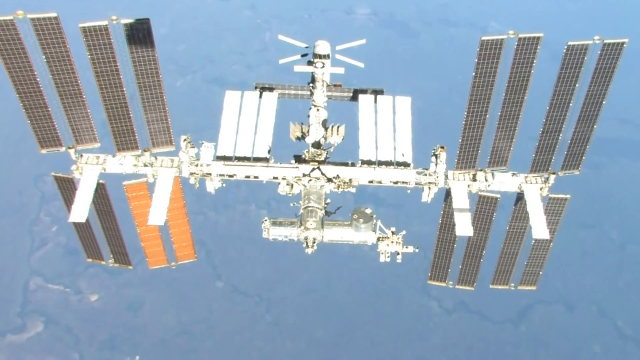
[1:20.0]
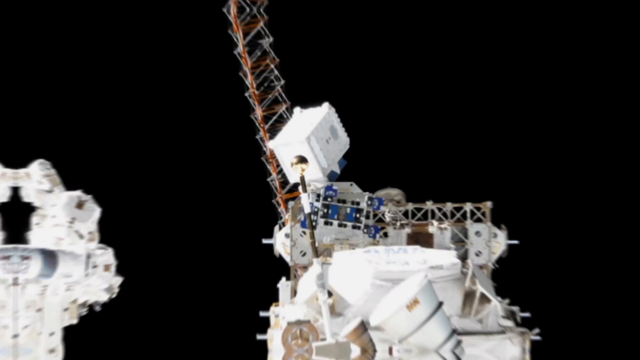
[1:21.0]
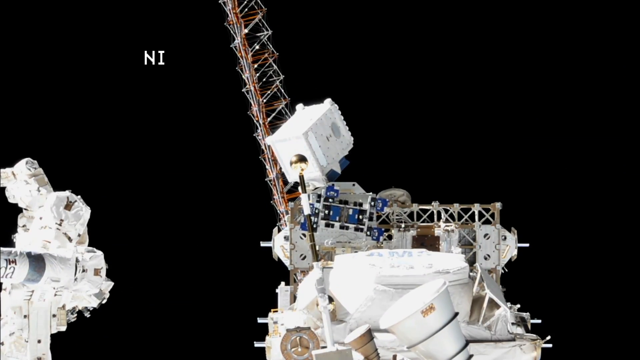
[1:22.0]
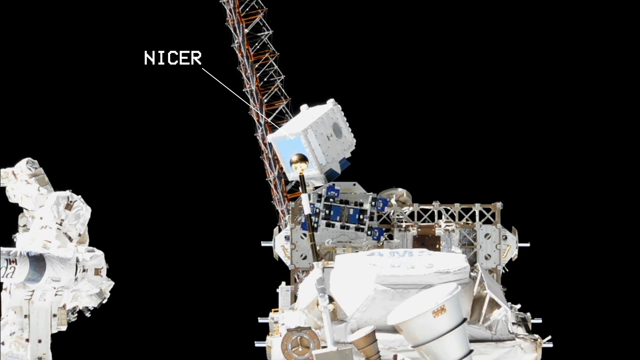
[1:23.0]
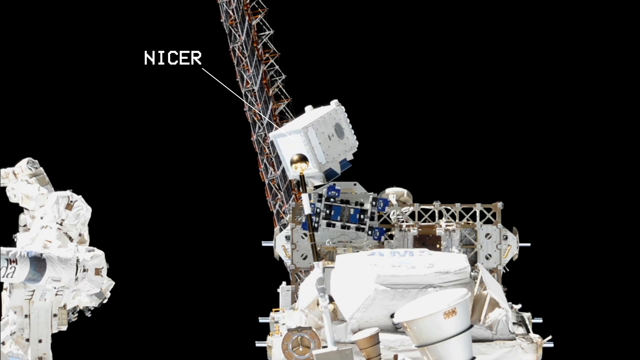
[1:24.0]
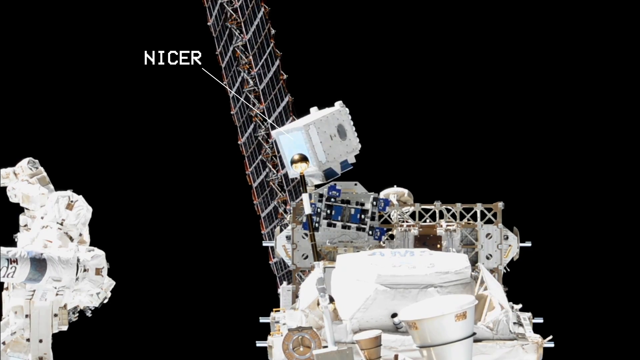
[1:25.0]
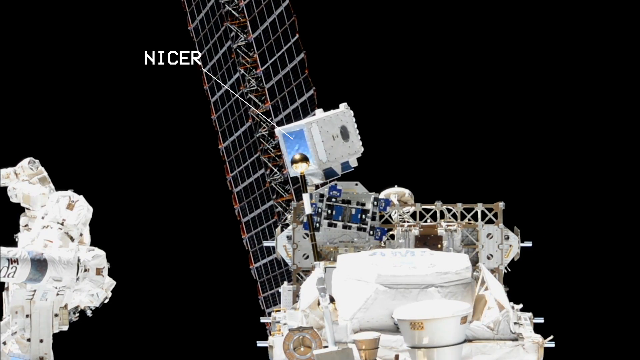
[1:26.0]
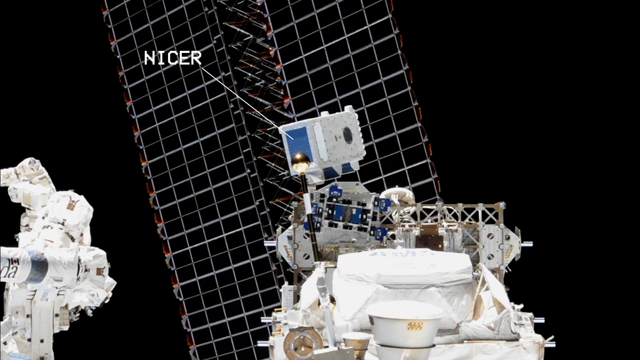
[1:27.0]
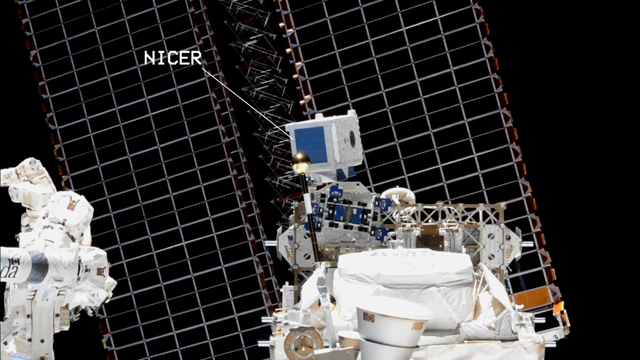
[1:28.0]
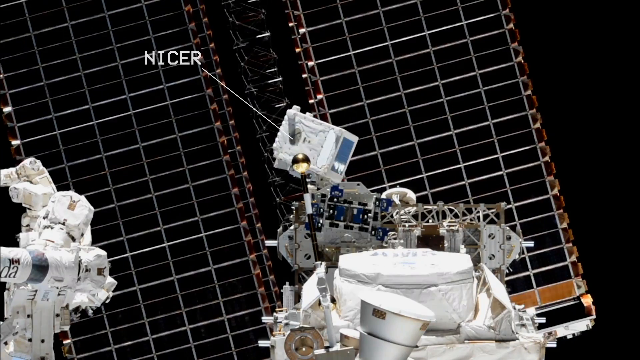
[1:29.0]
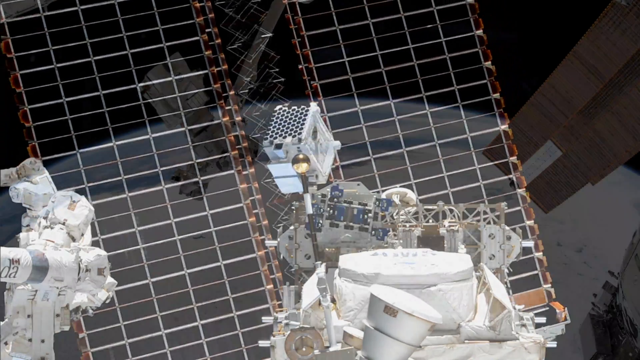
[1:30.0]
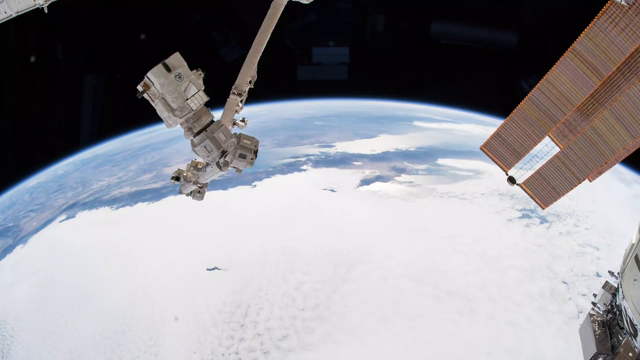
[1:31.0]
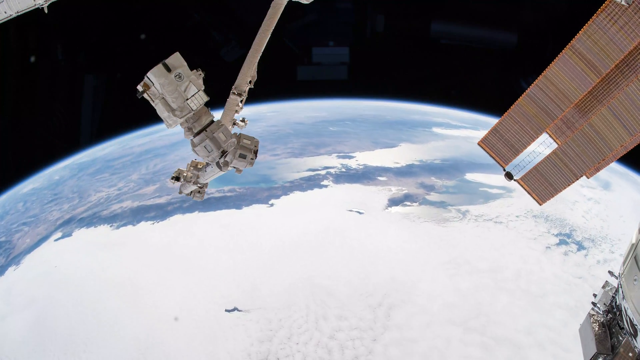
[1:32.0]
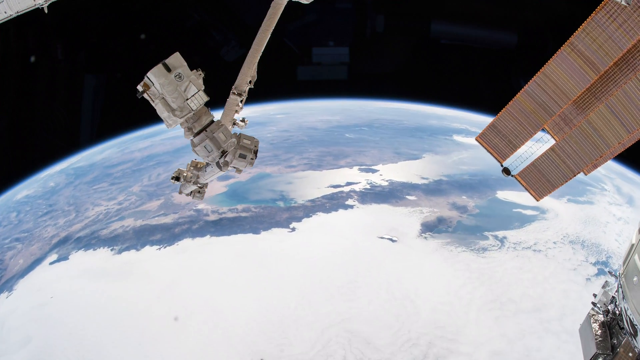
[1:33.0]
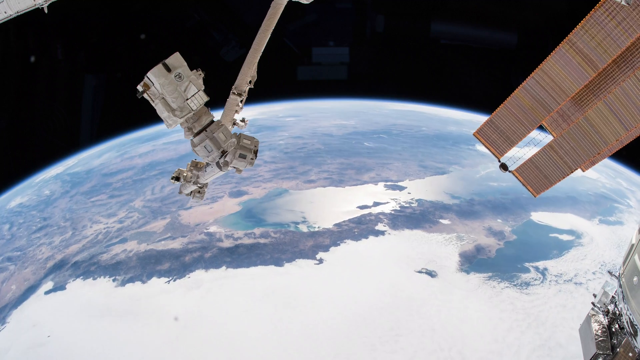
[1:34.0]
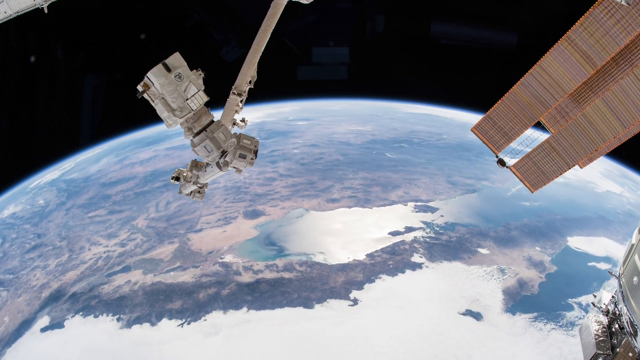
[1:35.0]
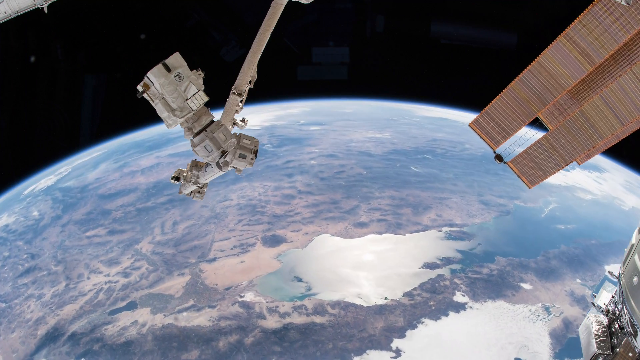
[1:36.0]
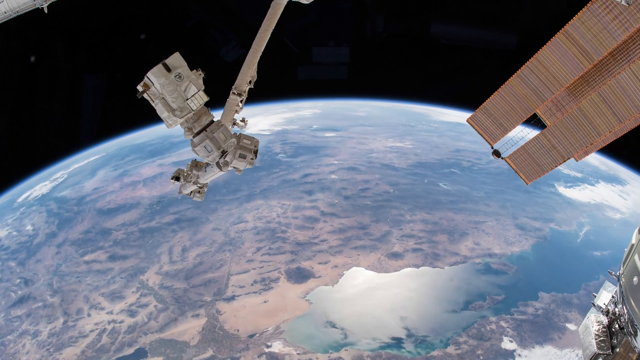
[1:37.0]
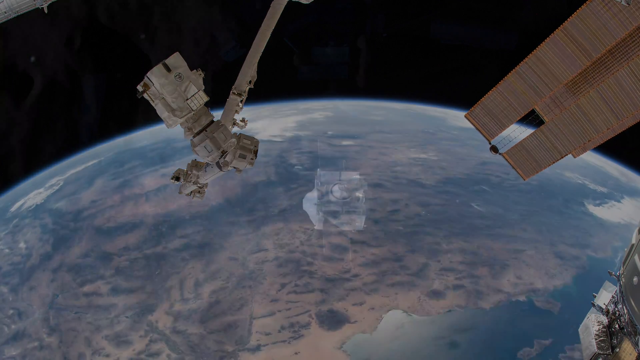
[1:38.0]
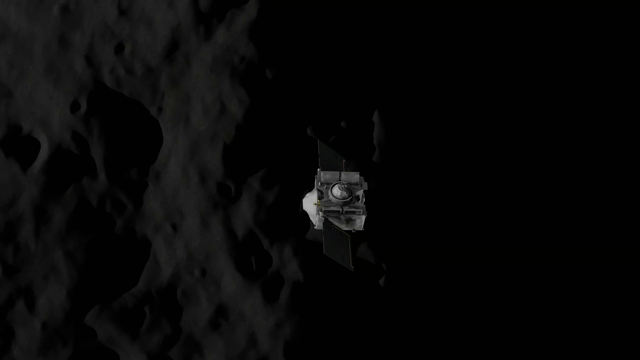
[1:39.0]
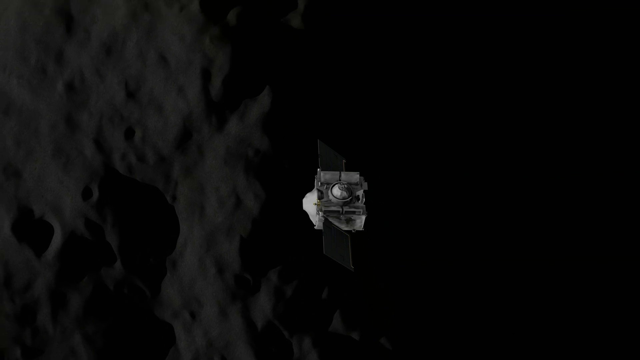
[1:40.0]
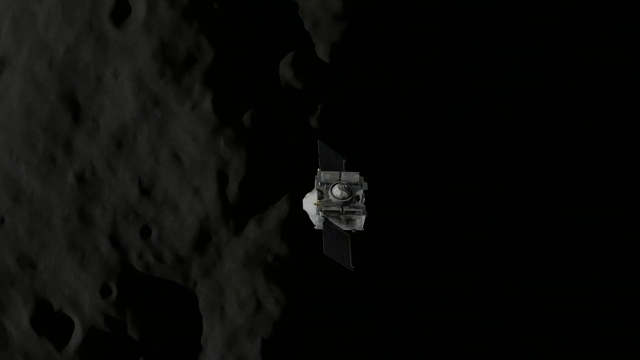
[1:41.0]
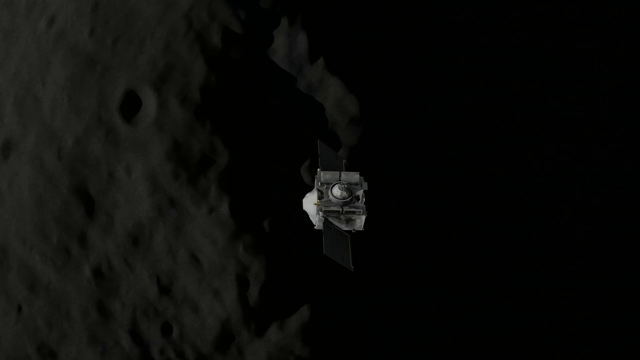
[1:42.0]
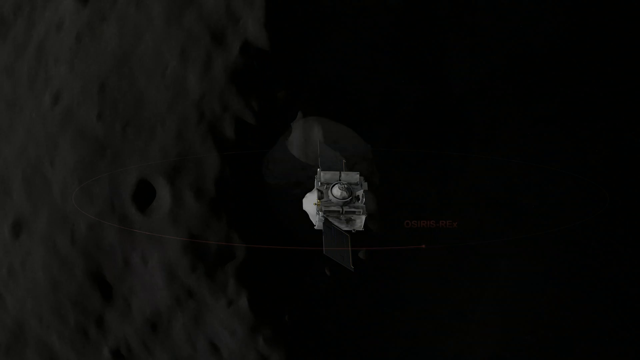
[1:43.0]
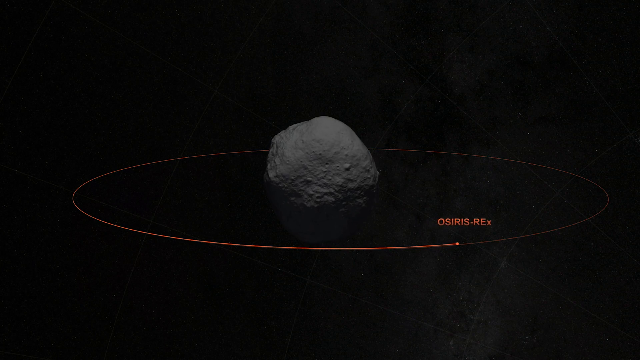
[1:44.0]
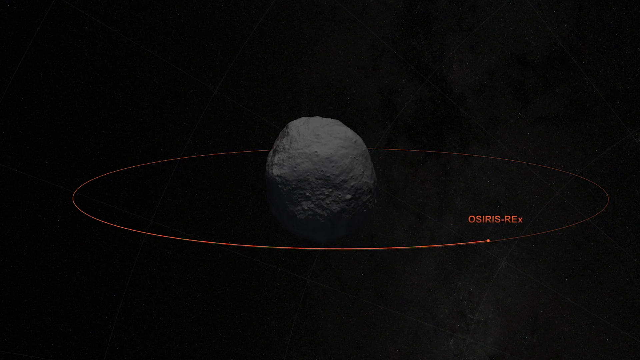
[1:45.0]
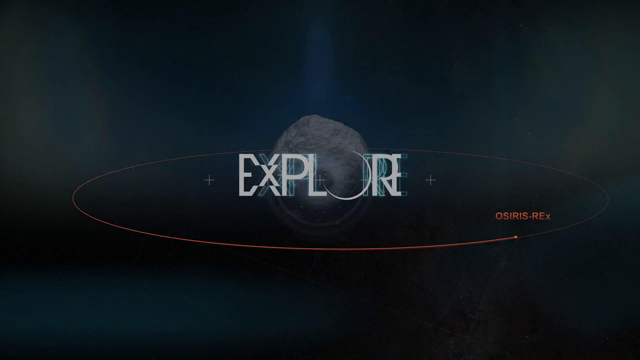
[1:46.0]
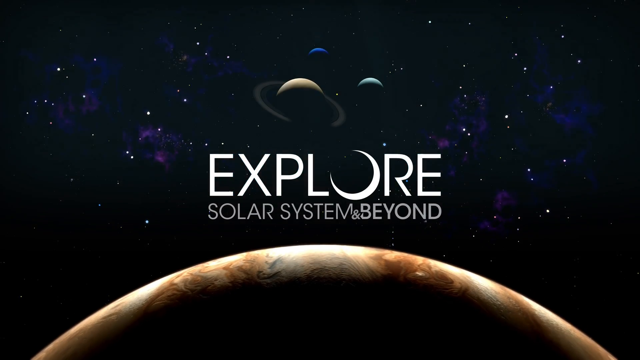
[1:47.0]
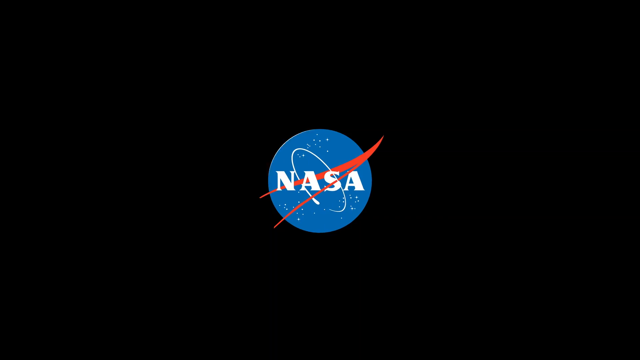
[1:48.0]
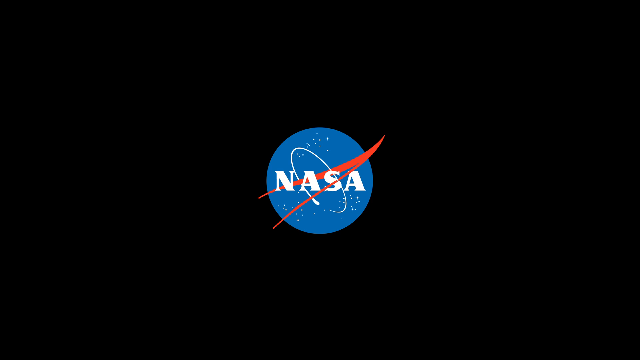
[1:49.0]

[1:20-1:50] The satellite continues moving through the sky. The view then changes to a close-up of part of the satellite, showing the detail of how it is constructed. The word "nicer" appears at the top of the screen, near a rotating tower, and points to a box-like structure near the base of the tower. The panels behind the main satellite rotate until they are shown at their widest point, and the nicer box moves around. Images of the Earth taken from the satellite show the Earth rotating below, with various parts of the satellite's arms in the foreground. The screen fades to an image of the small cube-shaped satellite going over the surface of what looks like the asteroid Bennu, with craters below. In a distant shot of the asteroid, a red ring moves around it with the words "OSIRIS-REx". A title page with a planet in the foreground and several planets in the background says "Explore Solar System and Beyond". The title shrinks into a planet, and the NASA logo, a blue circle with NASA in white letters and a red arrow, comes on the screen.